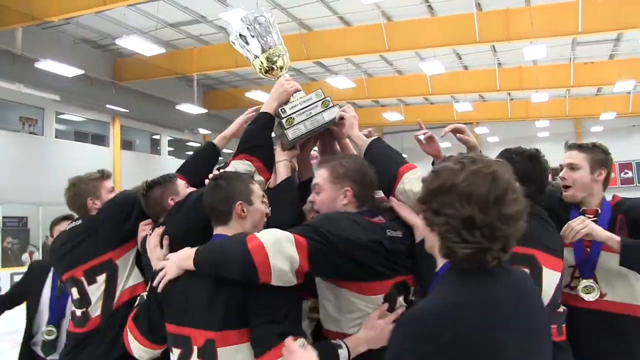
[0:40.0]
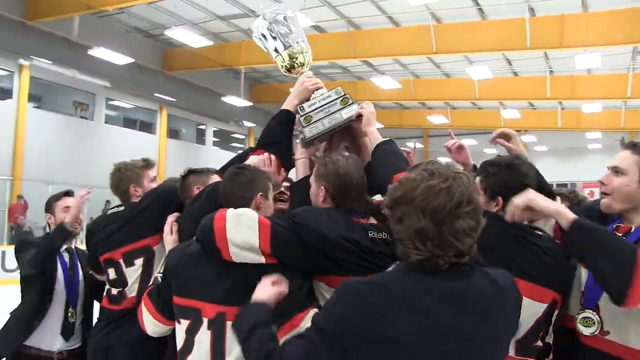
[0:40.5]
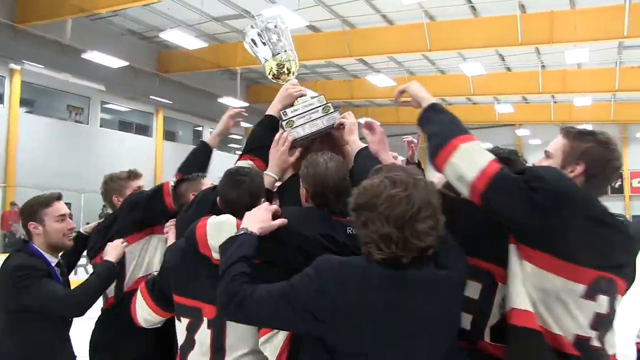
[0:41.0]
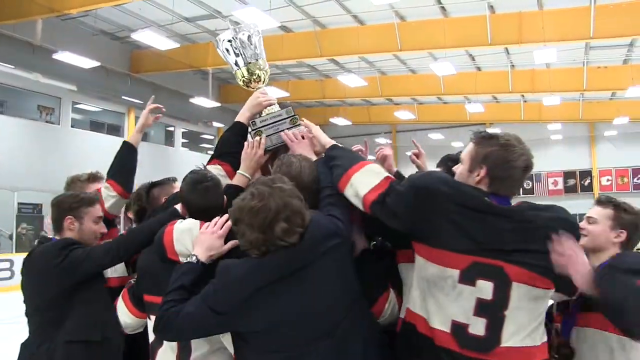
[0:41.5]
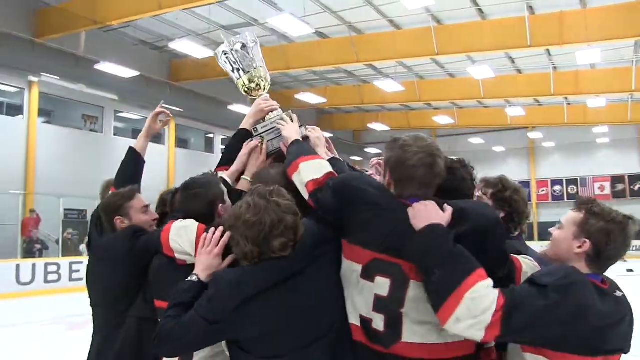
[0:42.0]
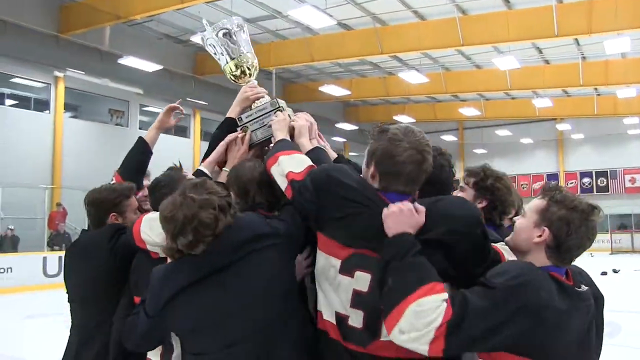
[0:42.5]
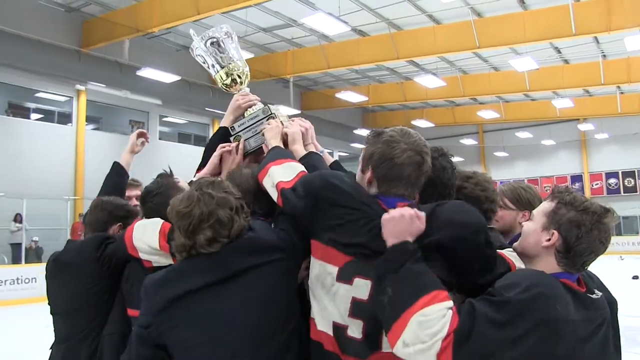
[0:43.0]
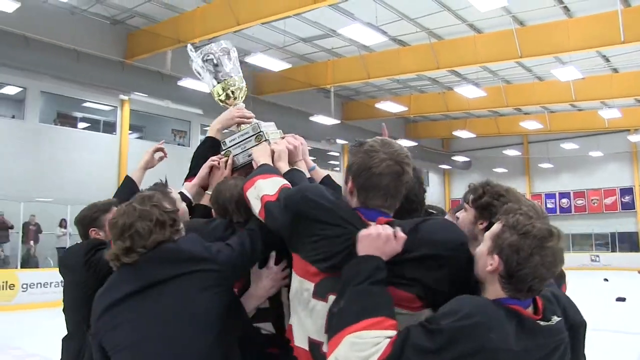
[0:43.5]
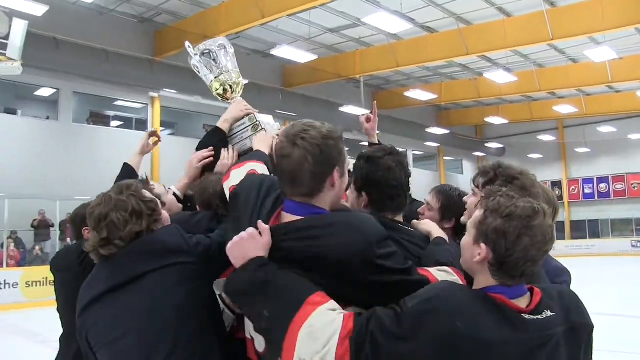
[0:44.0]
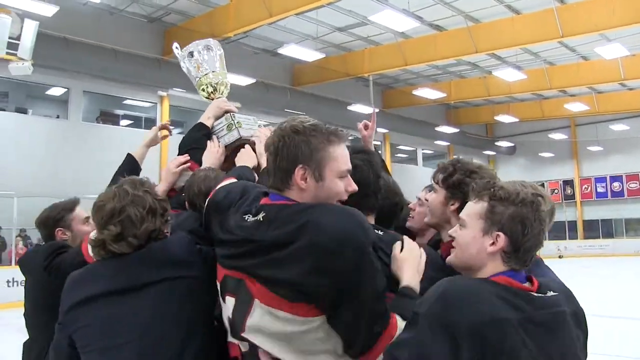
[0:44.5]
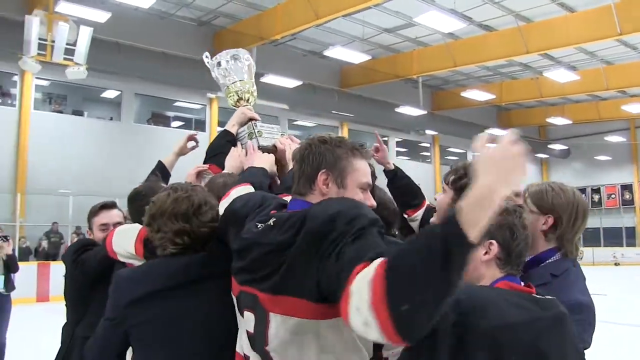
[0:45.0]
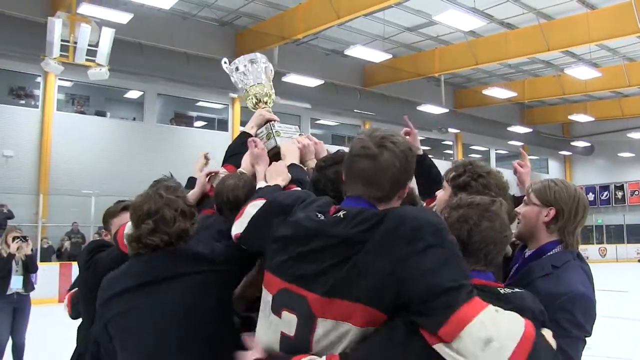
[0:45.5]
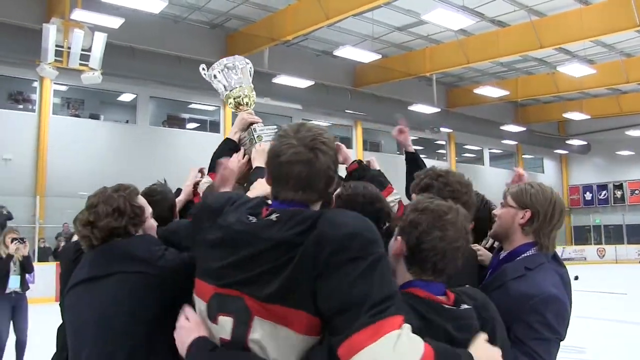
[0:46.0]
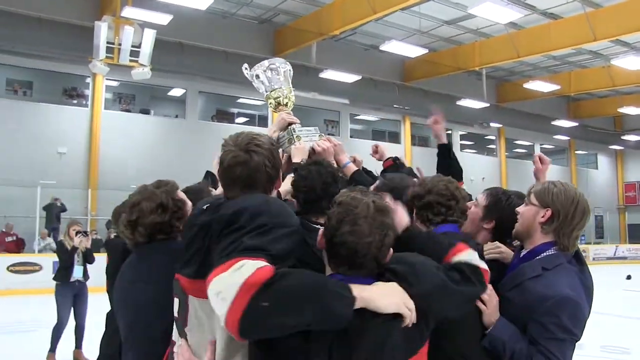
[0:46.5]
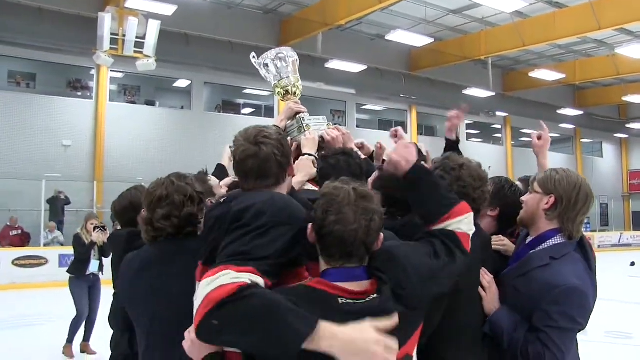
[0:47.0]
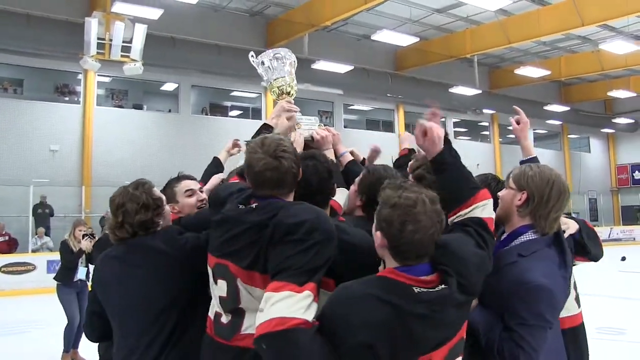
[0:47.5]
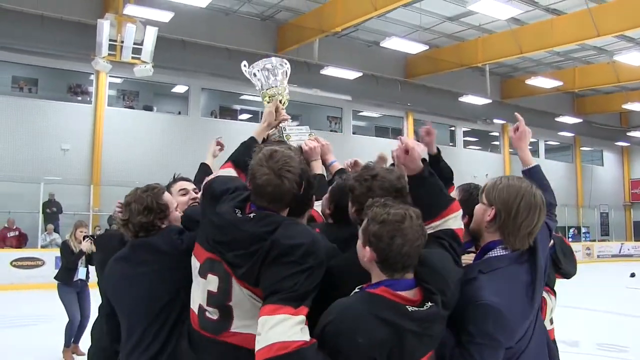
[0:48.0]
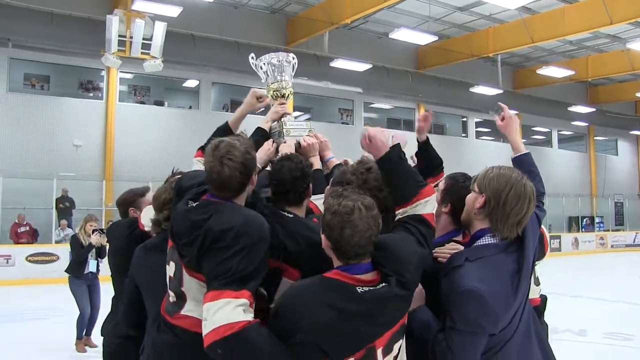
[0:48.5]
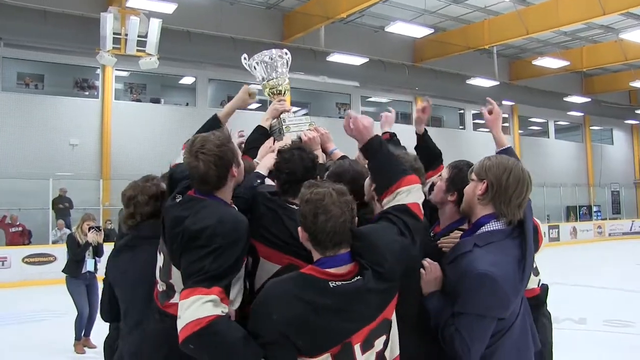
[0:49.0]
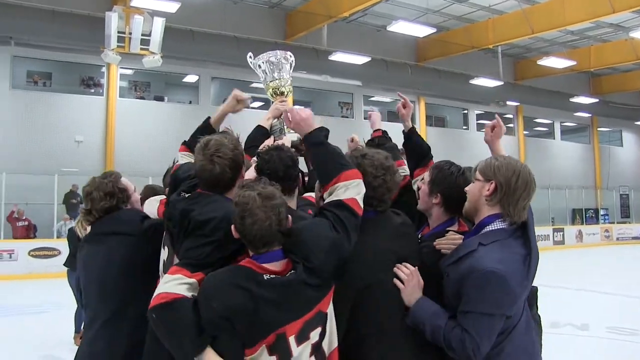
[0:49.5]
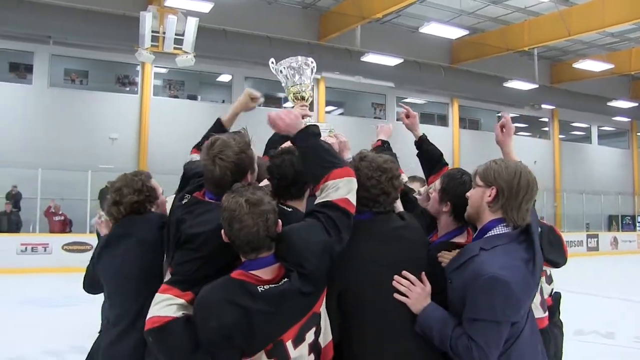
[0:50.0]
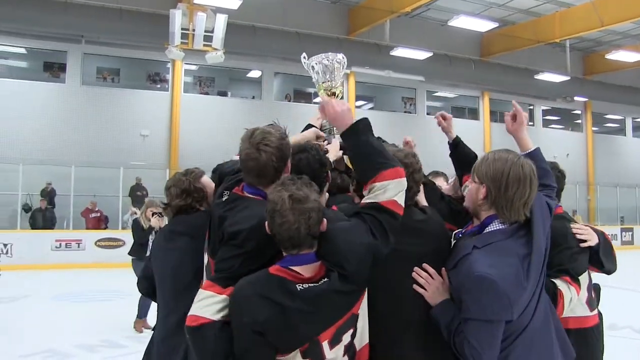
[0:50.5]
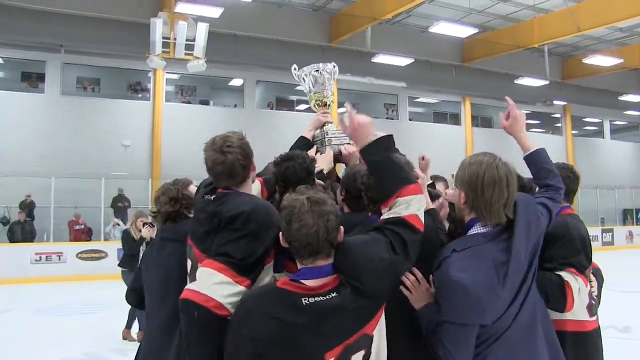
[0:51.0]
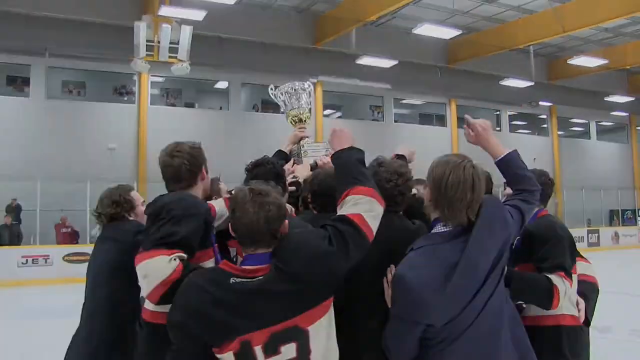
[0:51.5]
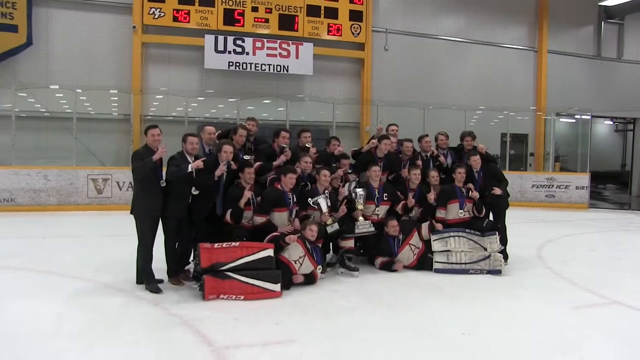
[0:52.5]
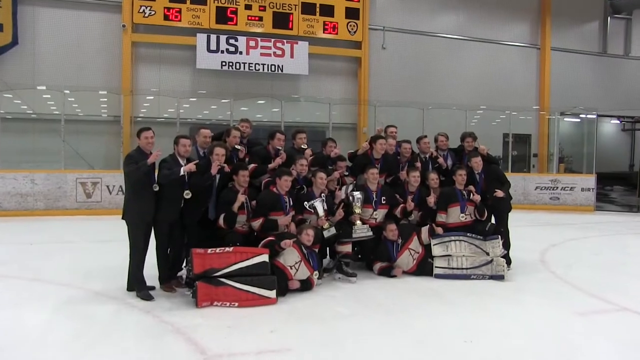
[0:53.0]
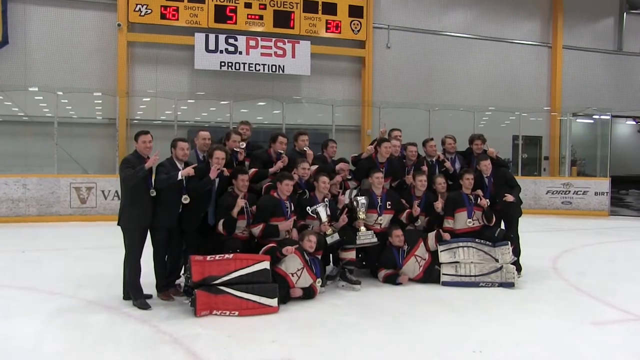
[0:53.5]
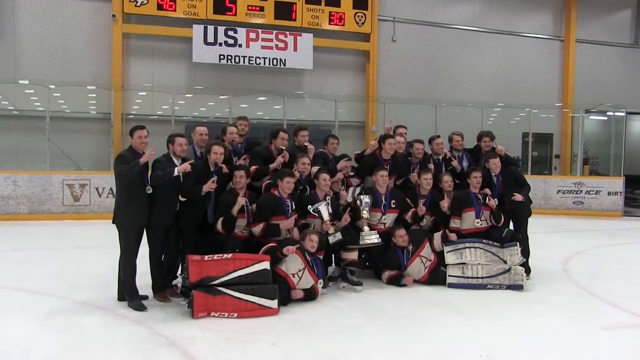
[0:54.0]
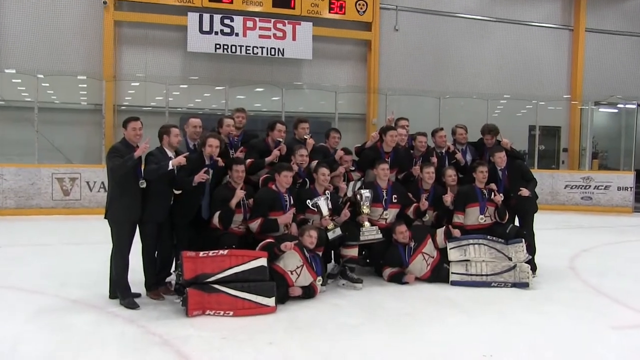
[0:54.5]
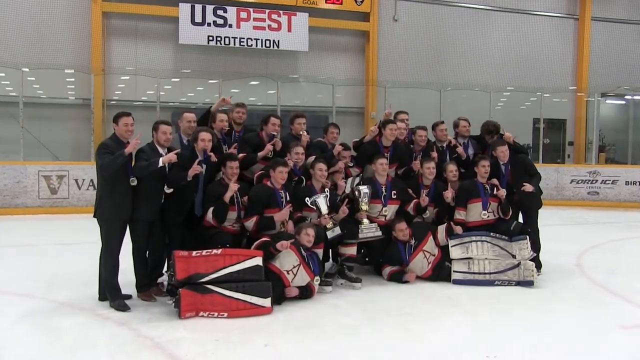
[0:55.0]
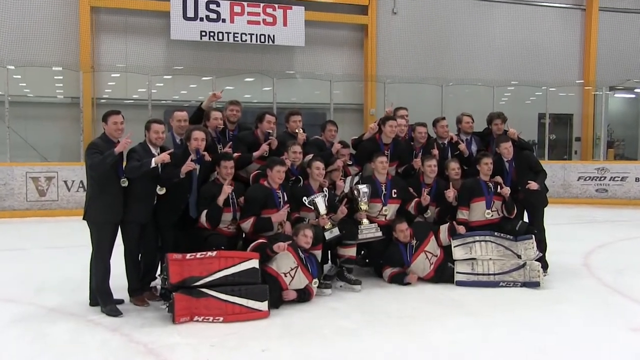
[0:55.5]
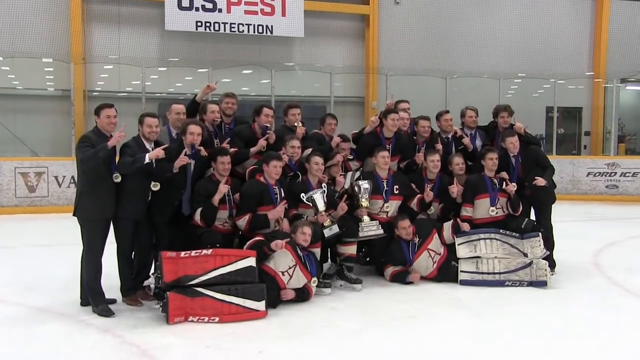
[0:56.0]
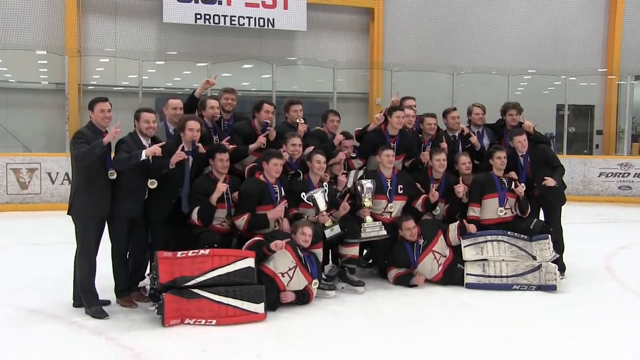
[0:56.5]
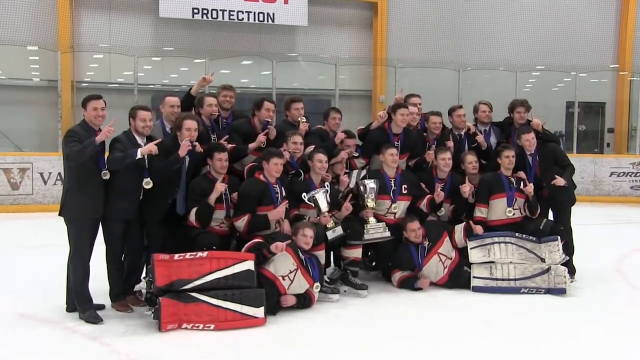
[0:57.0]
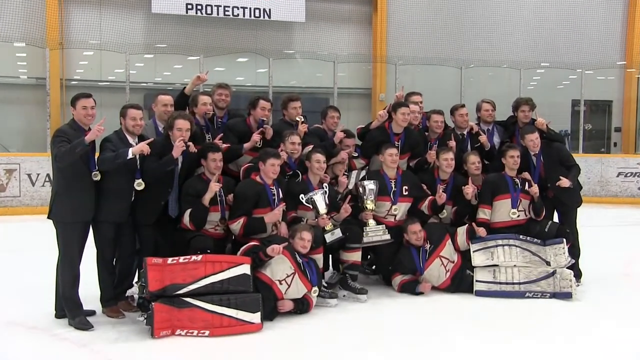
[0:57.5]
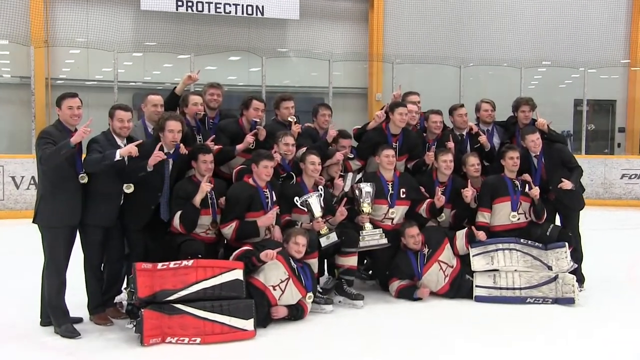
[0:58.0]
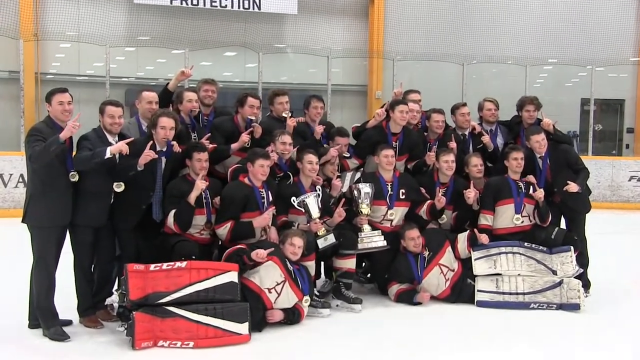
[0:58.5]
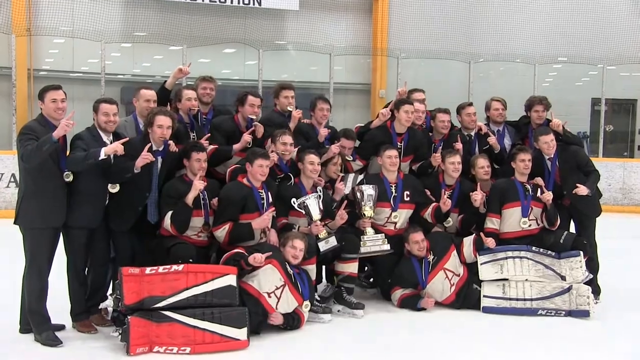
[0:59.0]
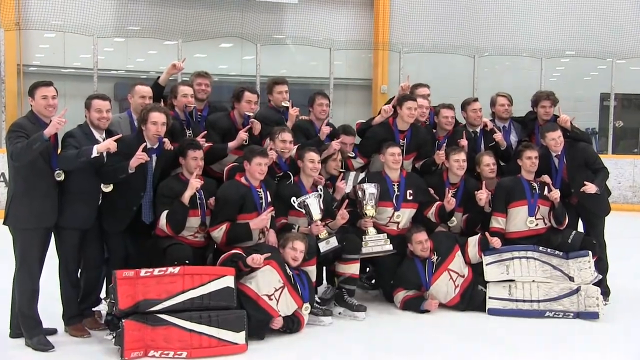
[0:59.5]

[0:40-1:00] A number of hockey players hold up the golden trophy, surrounding it as they hoist it up. They appear very happy and cheer as the trophy is raised.